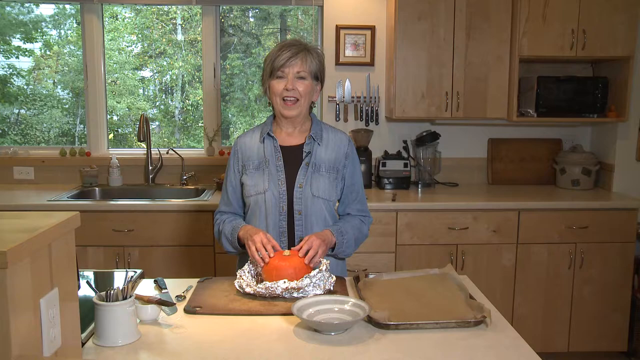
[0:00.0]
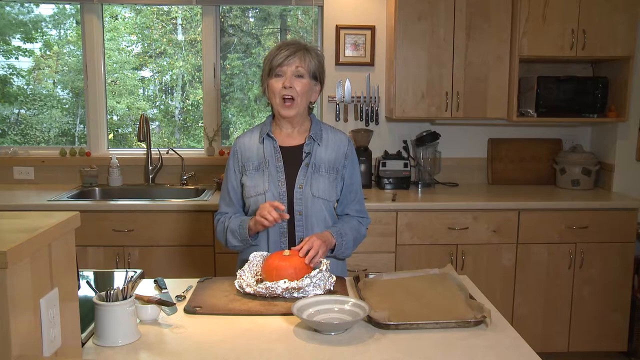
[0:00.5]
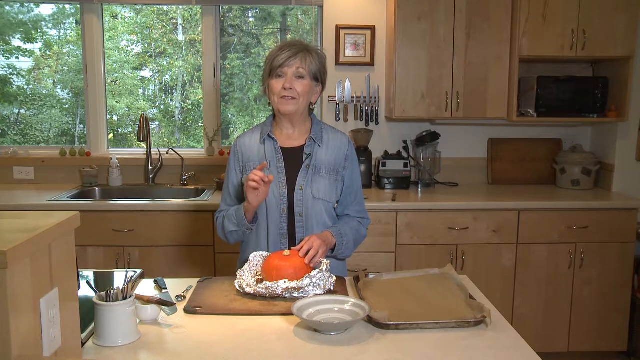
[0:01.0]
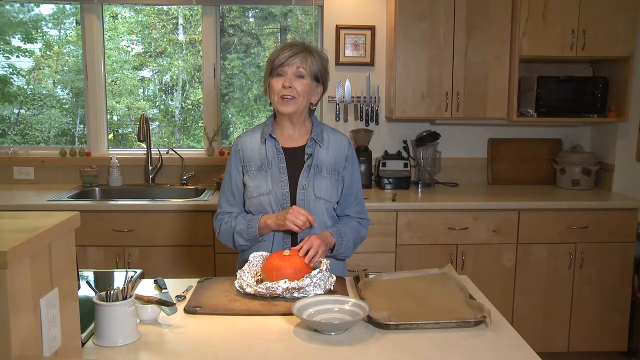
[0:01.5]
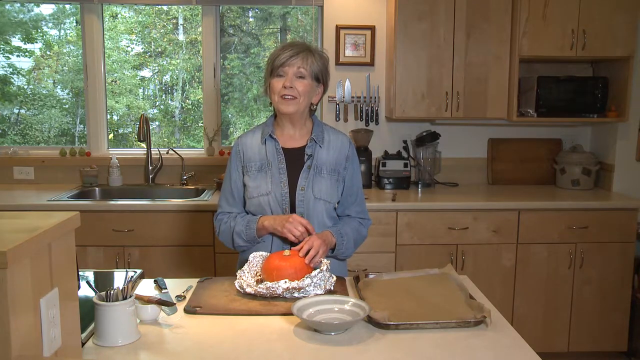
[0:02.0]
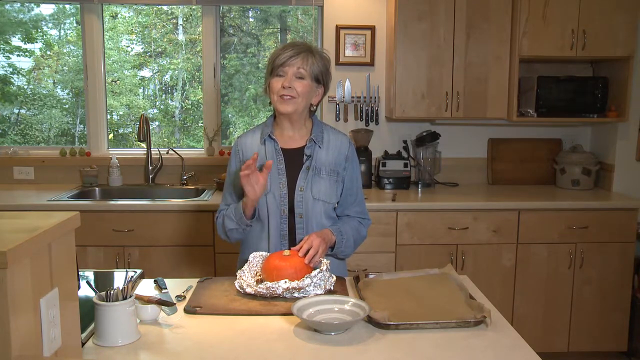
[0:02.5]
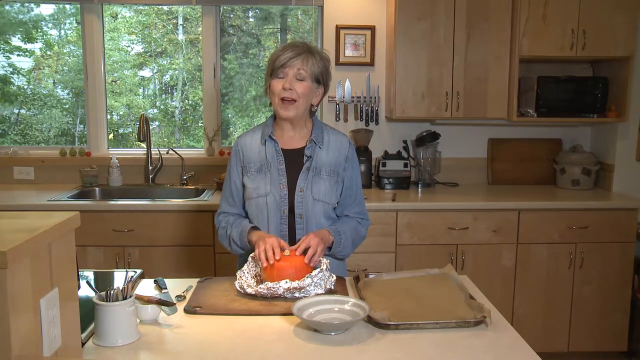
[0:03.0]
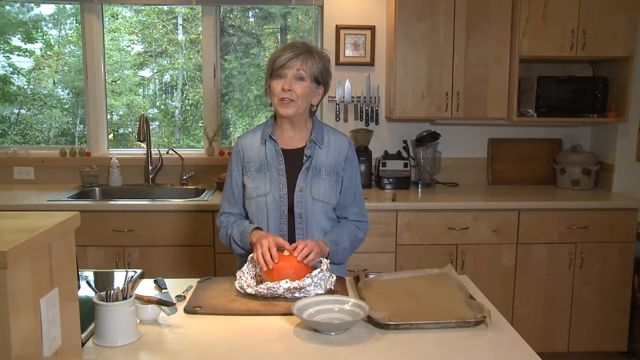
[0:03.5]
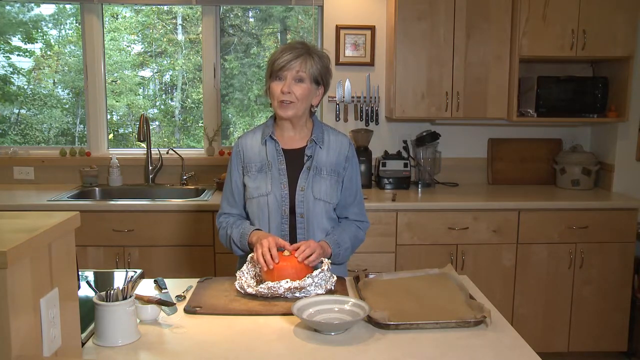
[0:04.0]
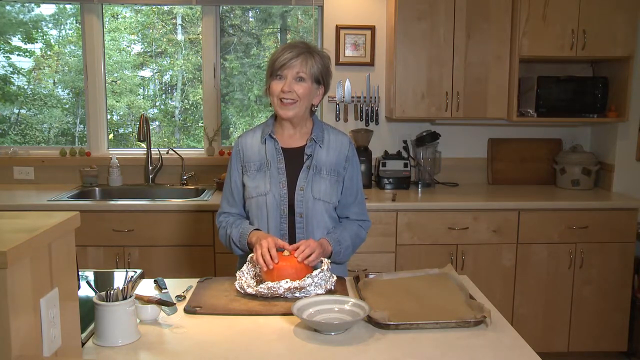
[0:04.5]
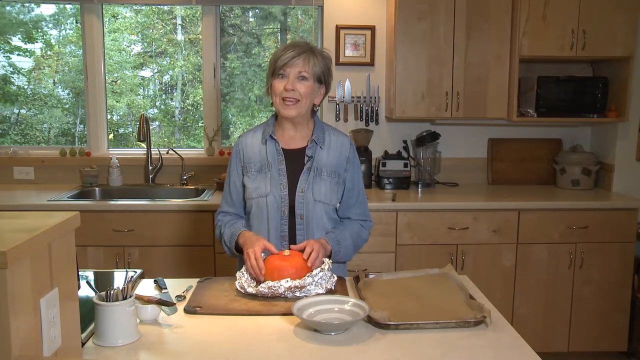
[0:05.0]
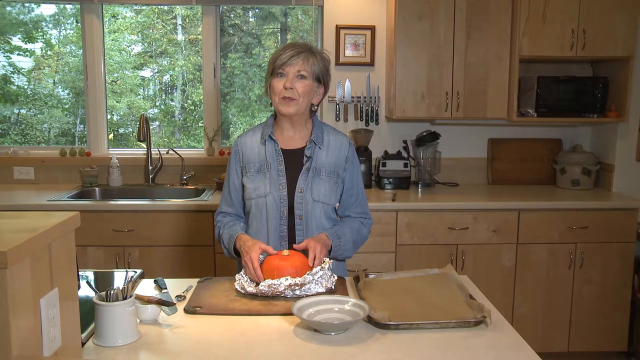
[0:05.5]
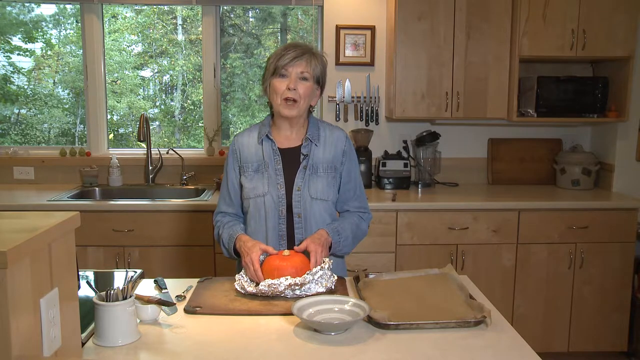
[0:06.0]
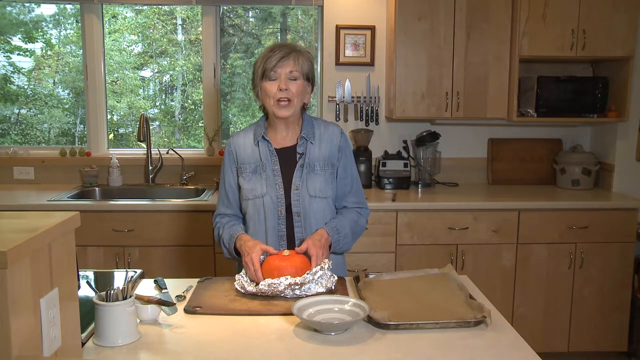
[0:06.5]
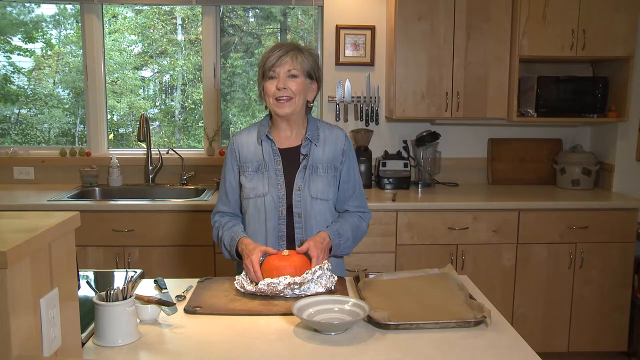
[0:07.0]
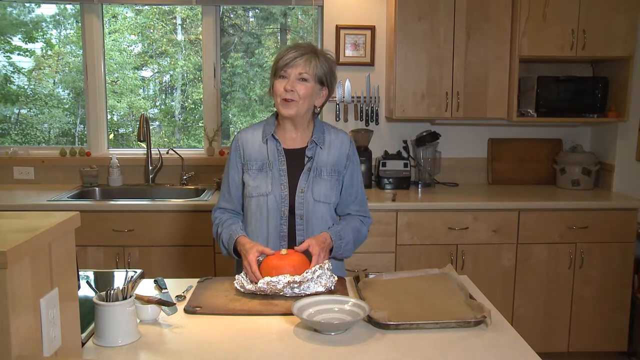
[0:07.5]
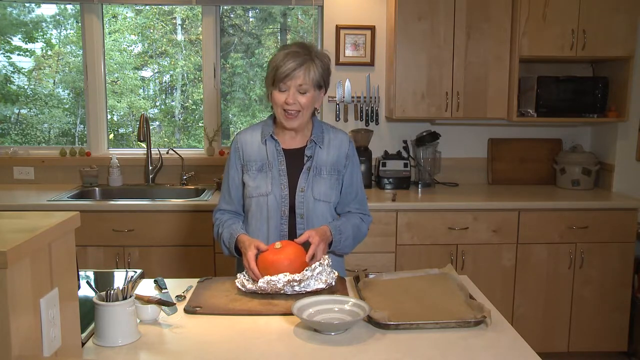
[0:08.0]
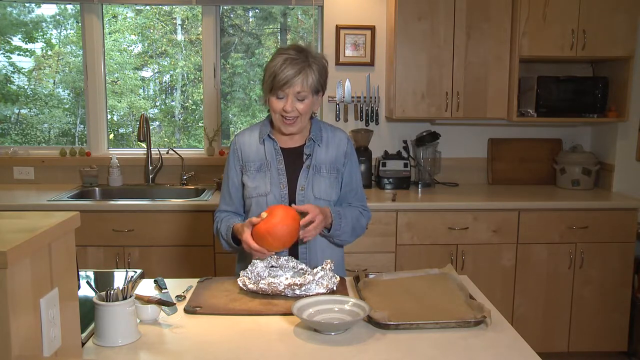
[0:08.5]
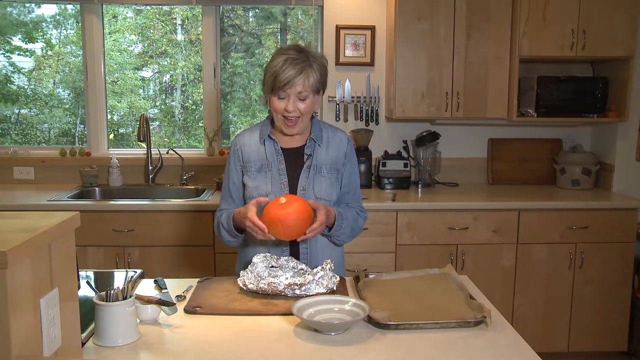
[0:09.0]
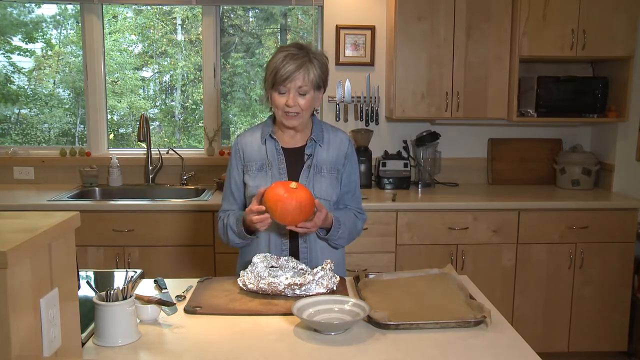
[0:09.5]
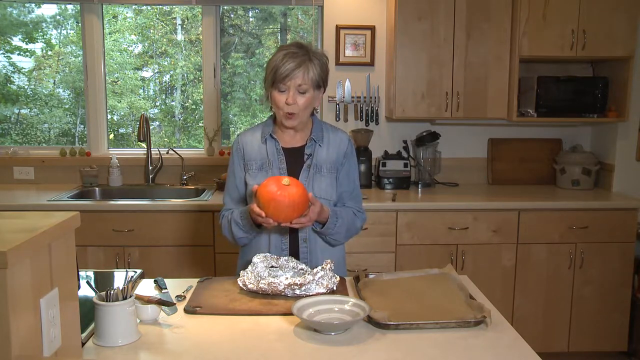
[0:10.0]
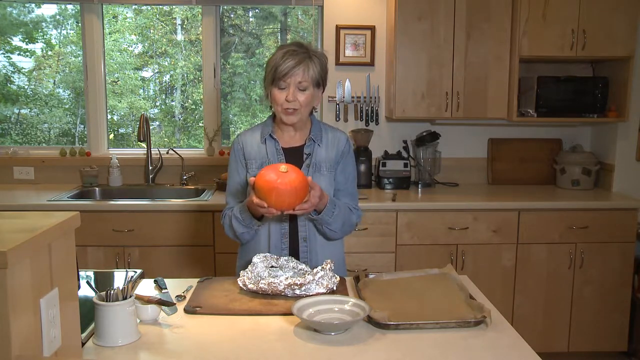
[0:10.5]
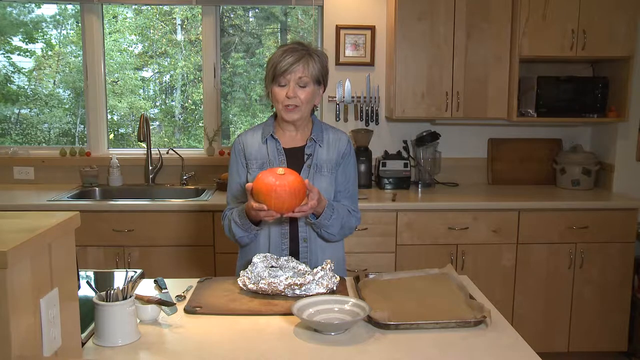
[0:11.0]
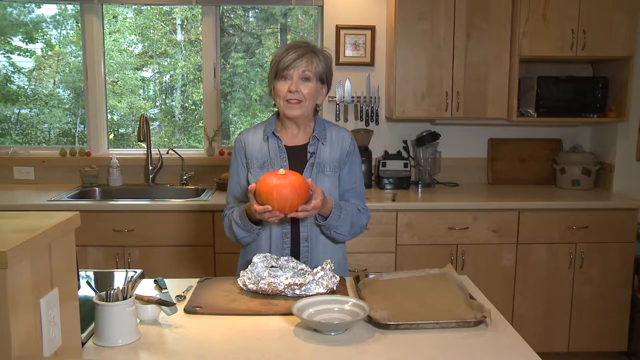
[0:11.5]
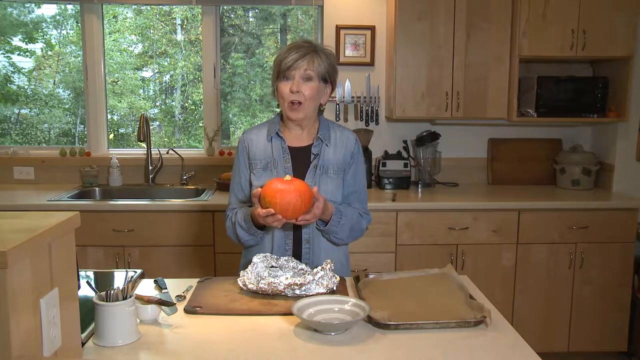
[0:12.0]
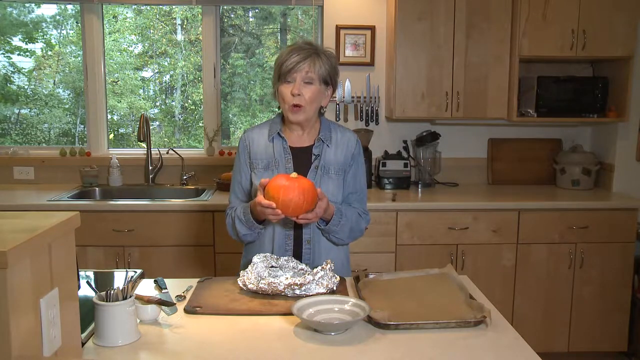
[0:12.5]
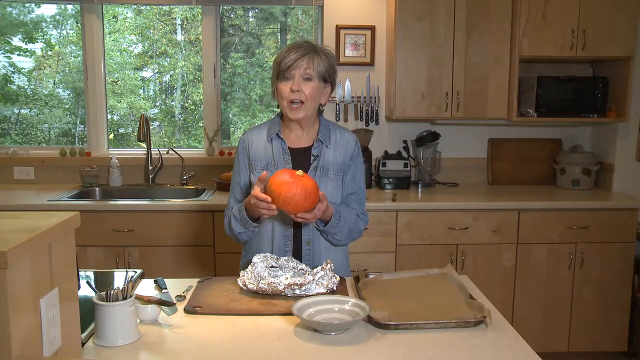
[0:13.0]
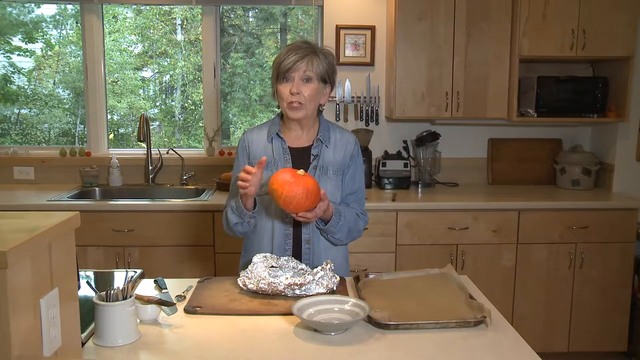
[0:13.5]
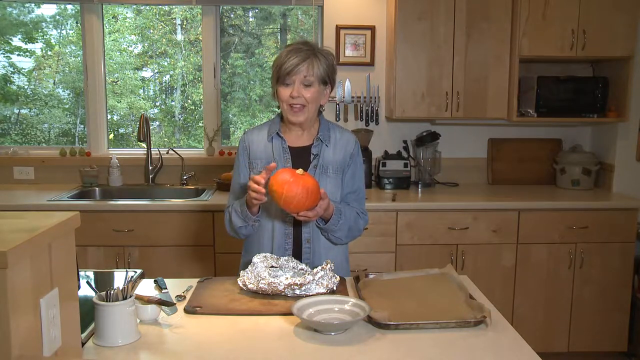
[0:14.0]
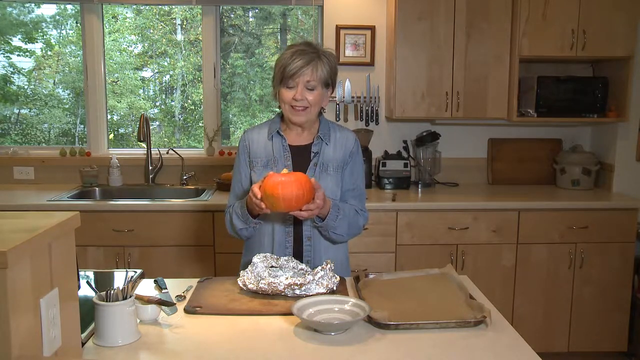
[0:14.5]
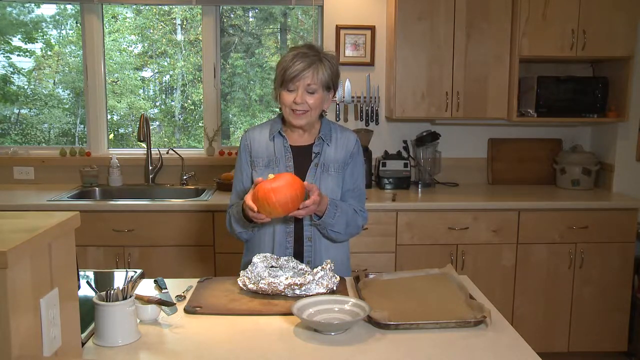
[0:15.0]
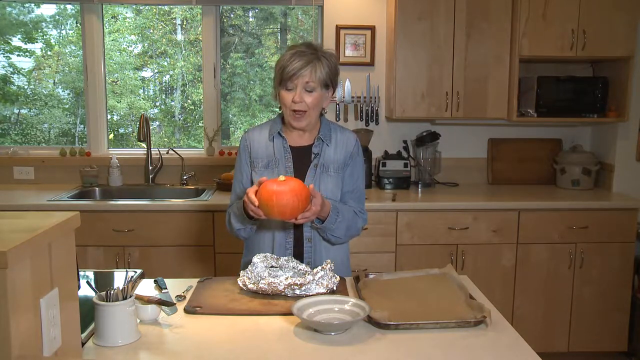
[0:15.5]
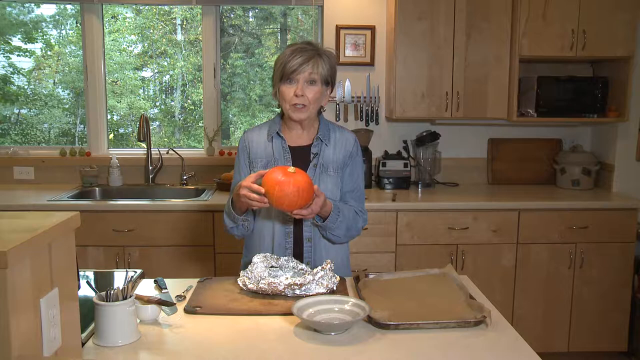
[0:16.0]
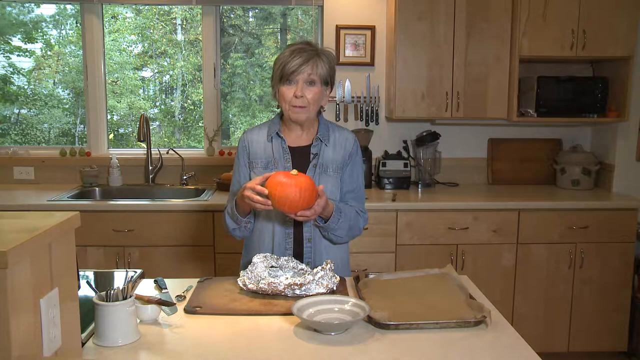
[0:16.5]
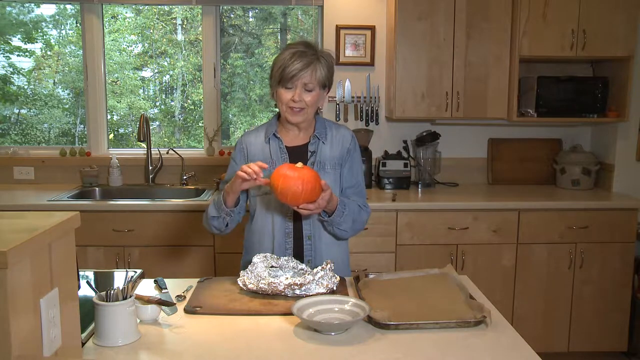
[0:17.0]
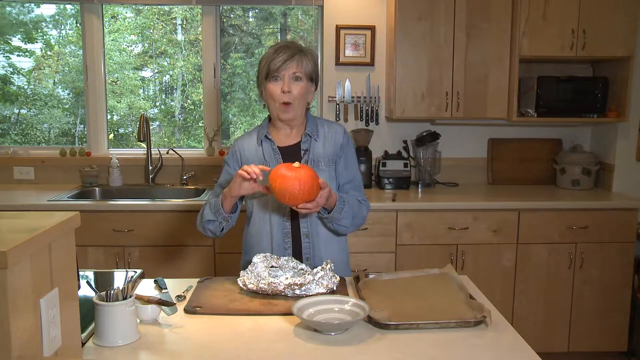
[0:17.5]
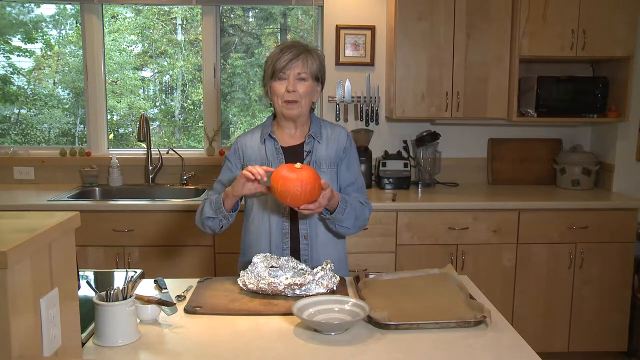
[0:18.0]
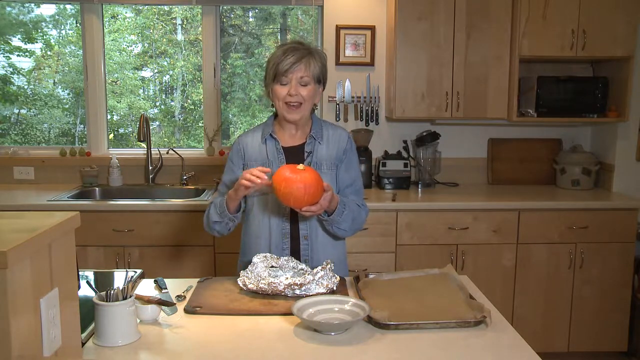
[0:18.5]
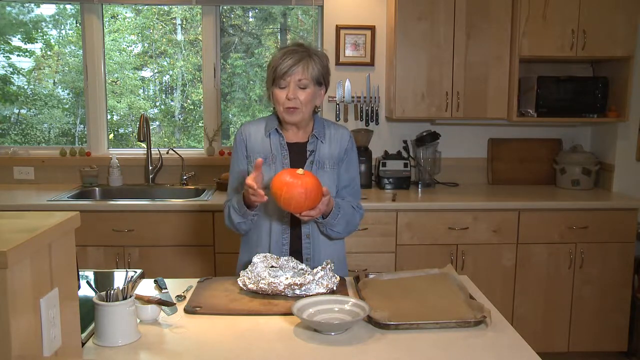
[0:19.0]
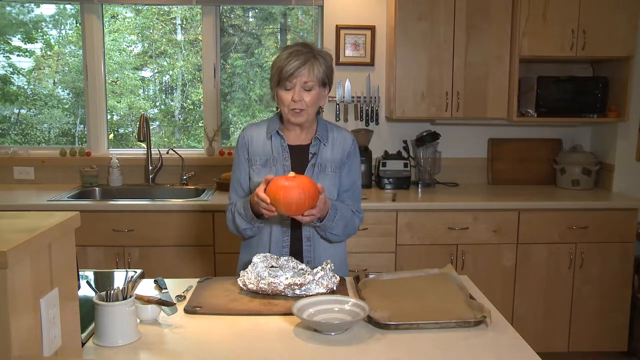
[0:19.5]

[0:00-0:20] In a kitchen, a white woman who looks to be in her mid to upper 40s has her hand on a small pumpkin on the counter. The kitchen looks large. On the countertop there is a blender, and on the right there is a microwave underneath a cabinet. There are cabinets on the wall and a knife rack with the knife blades turned upward. A small pitcher is in the frame, and there is a view of the outside with some trees out back, so the place is maybe somewhere in nature. The woman is talking. She wears a jean jacket and earrings and has short, kind of dirty-blondish hair. On the counter there is a cutting board and some foil in which the pumpkin was sitting. She holds the pumpkin up while she talks. To the right there is a tray with some parchment paper in it.